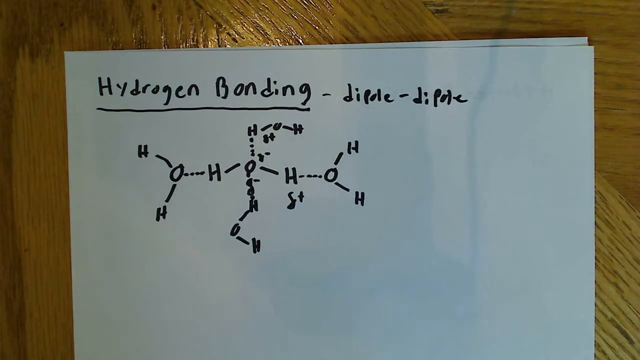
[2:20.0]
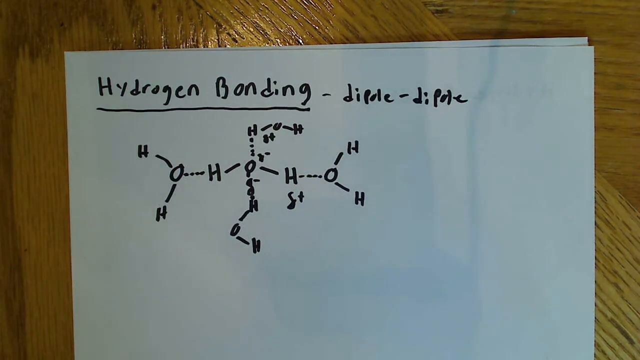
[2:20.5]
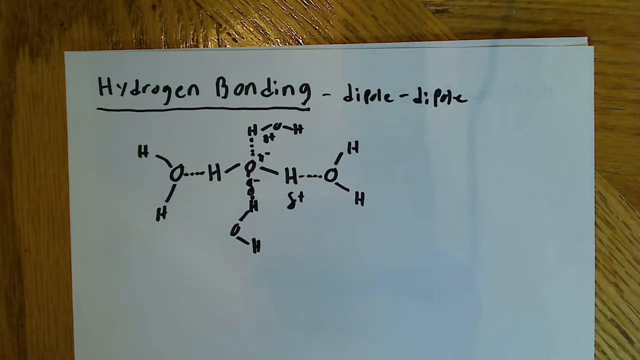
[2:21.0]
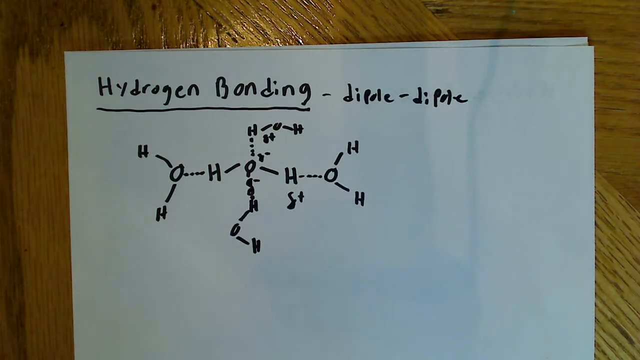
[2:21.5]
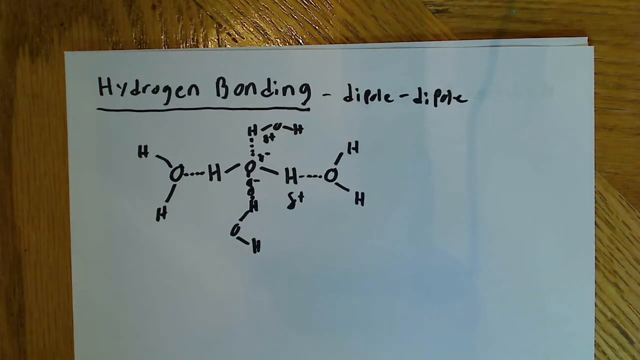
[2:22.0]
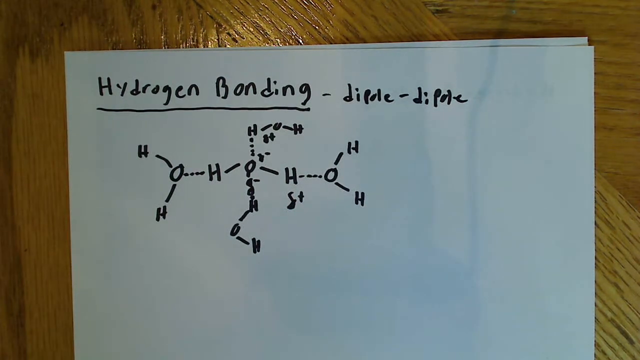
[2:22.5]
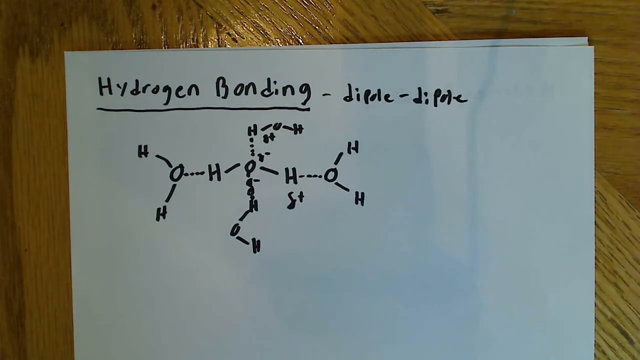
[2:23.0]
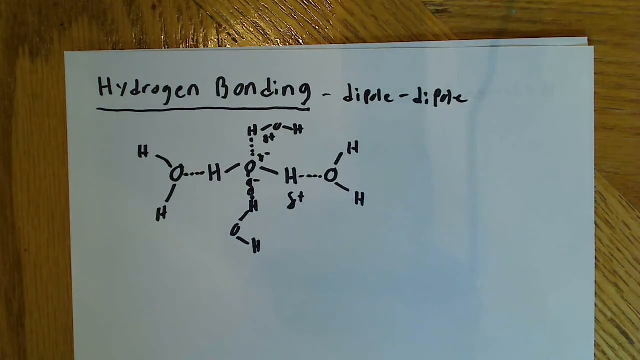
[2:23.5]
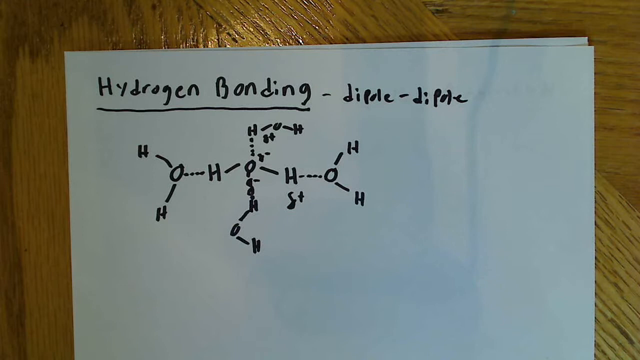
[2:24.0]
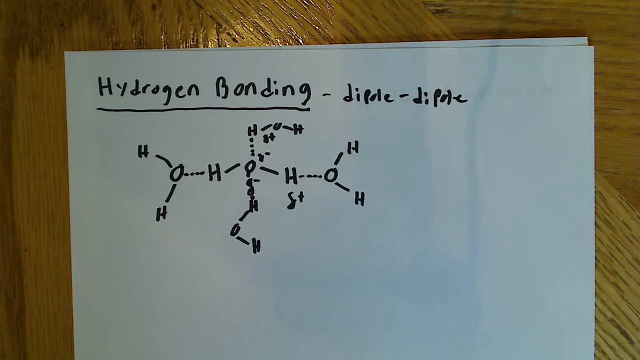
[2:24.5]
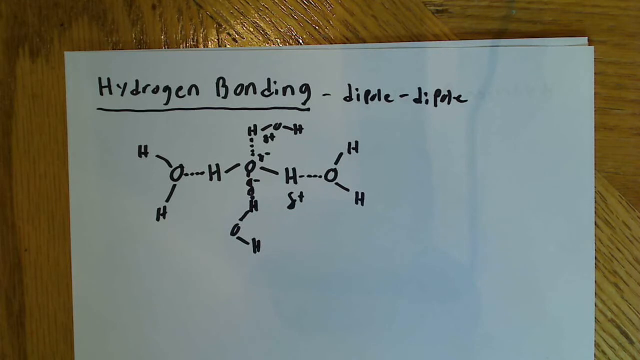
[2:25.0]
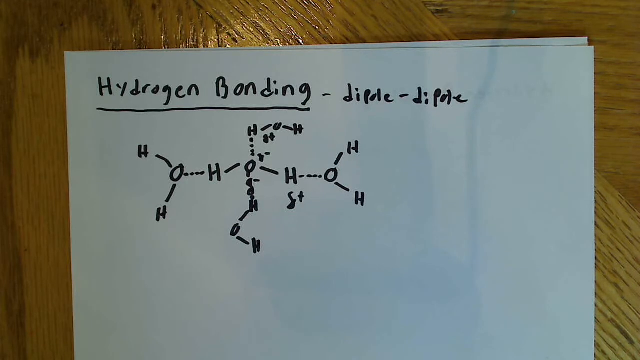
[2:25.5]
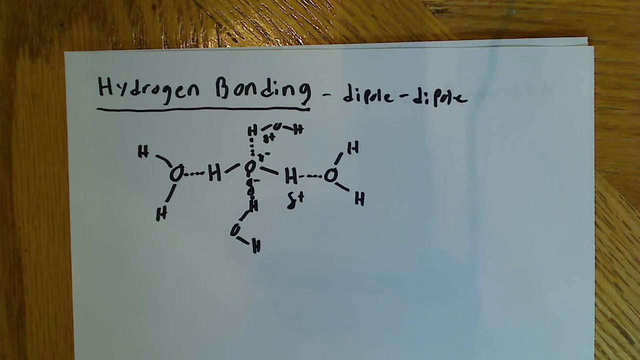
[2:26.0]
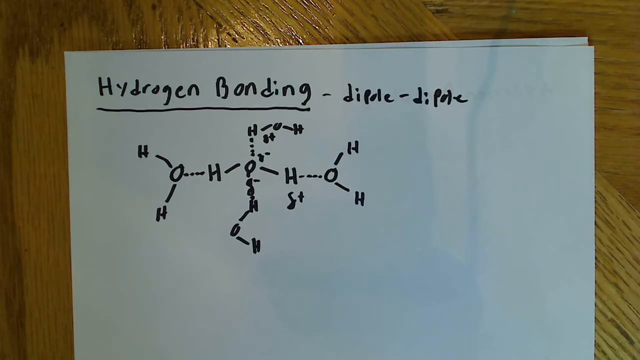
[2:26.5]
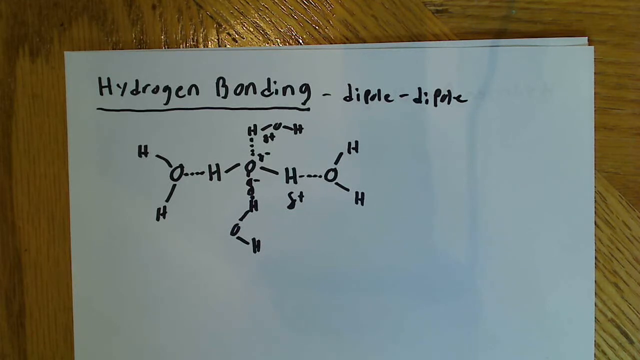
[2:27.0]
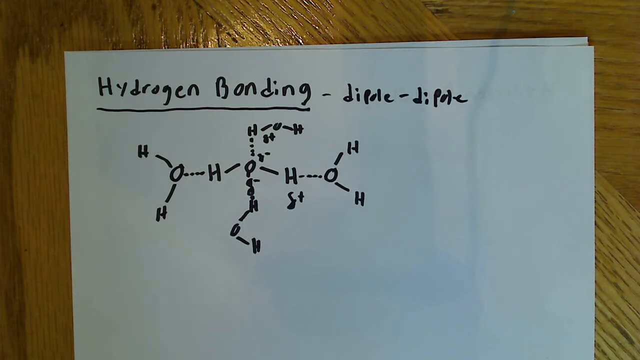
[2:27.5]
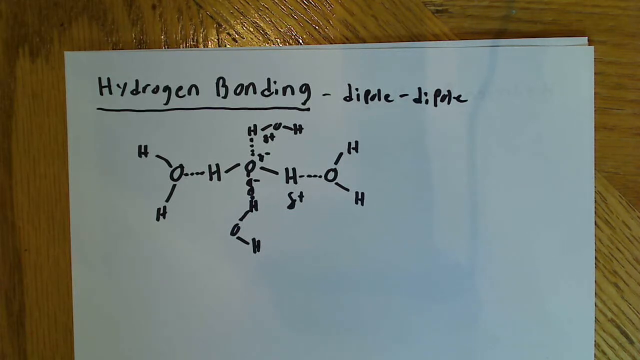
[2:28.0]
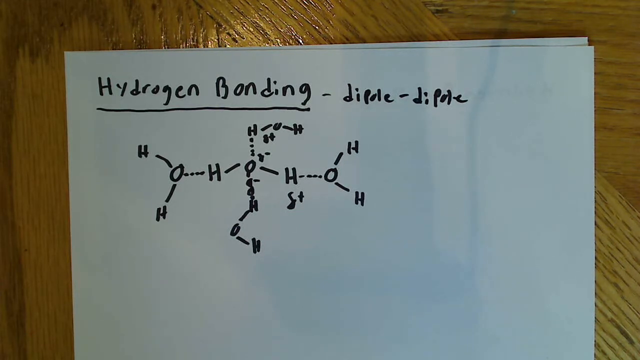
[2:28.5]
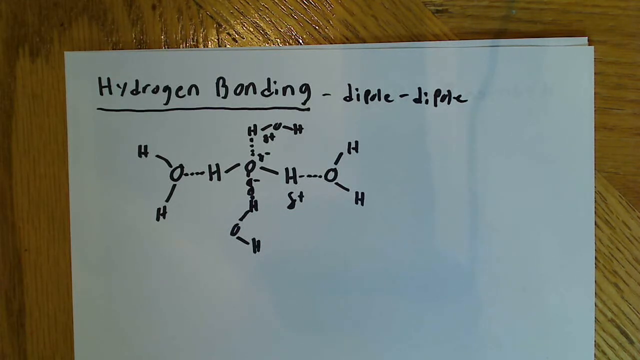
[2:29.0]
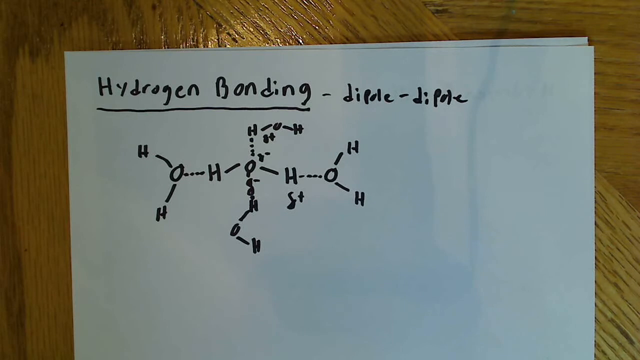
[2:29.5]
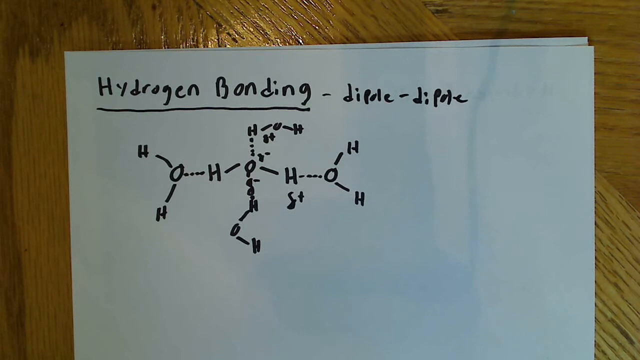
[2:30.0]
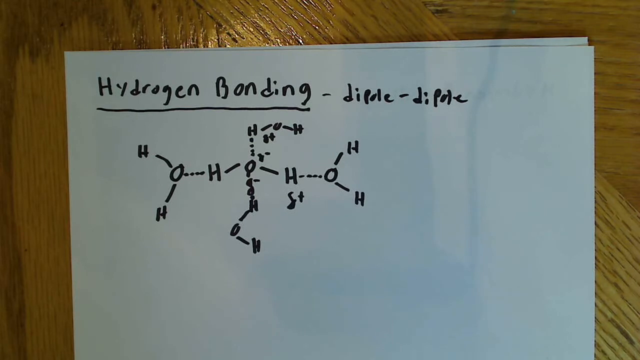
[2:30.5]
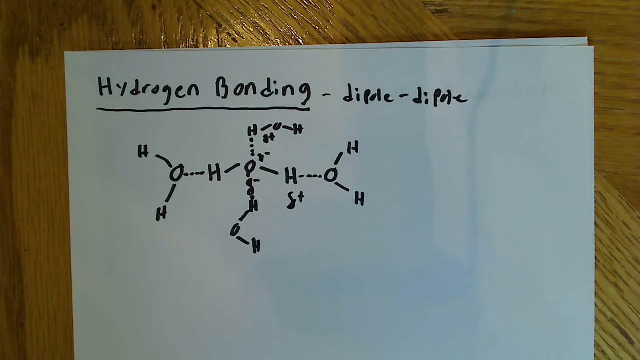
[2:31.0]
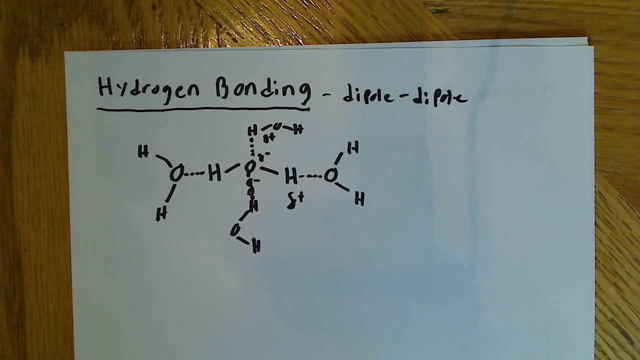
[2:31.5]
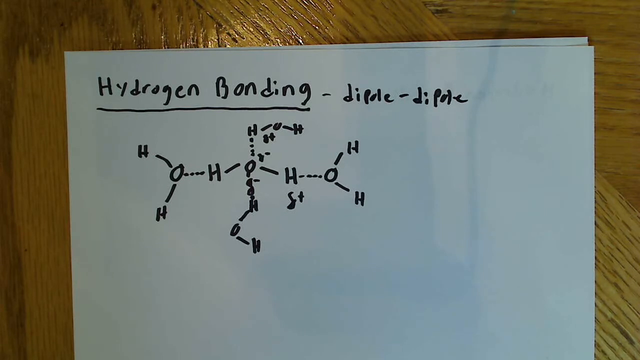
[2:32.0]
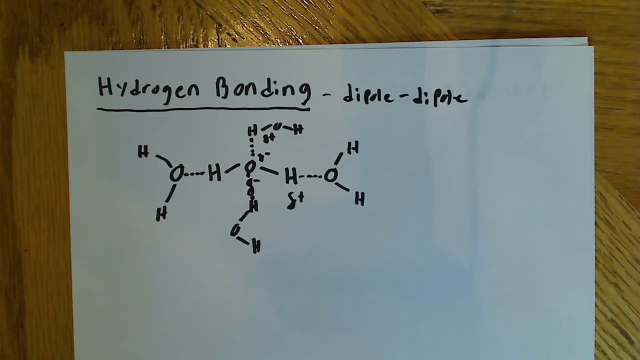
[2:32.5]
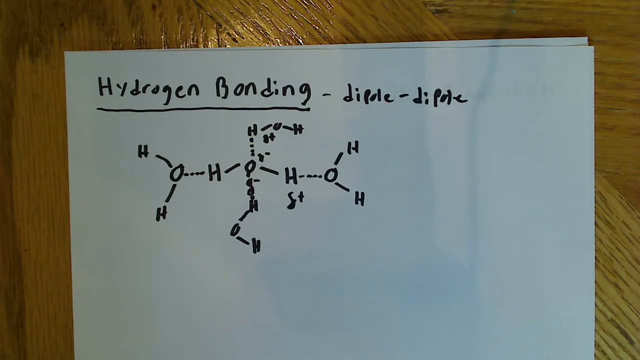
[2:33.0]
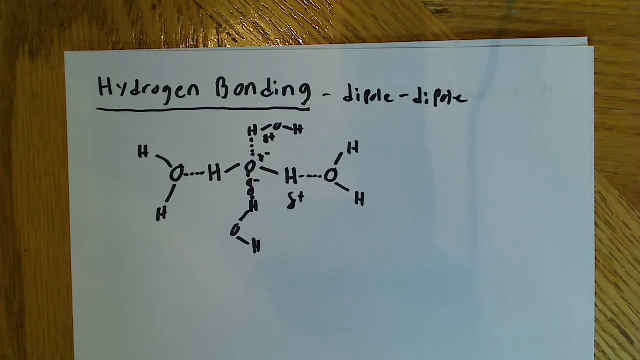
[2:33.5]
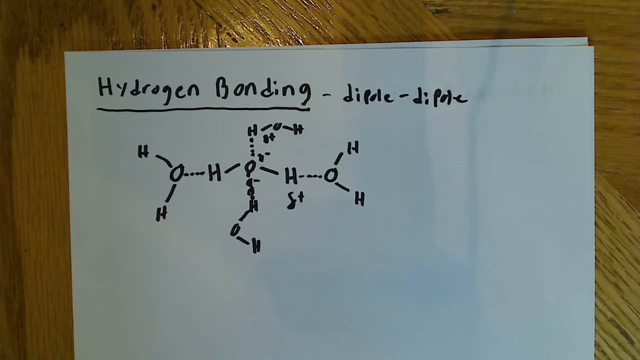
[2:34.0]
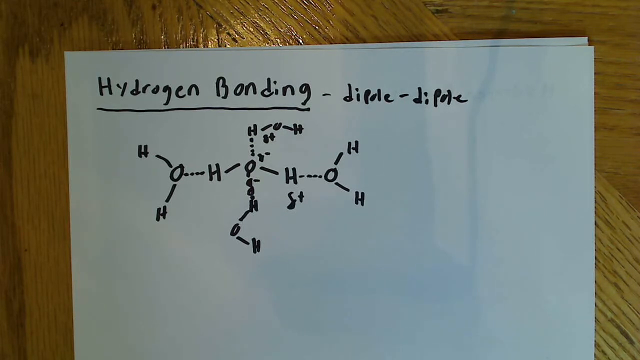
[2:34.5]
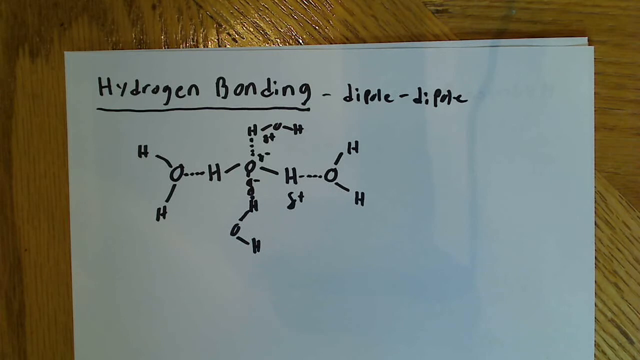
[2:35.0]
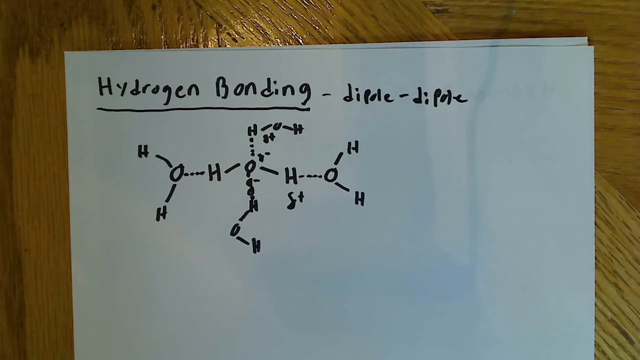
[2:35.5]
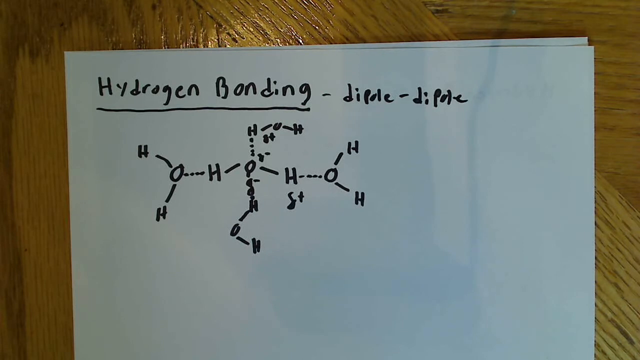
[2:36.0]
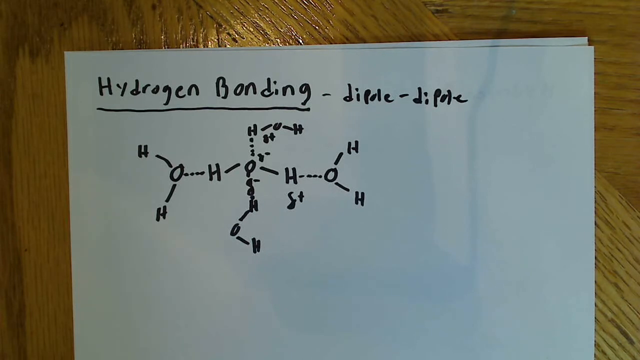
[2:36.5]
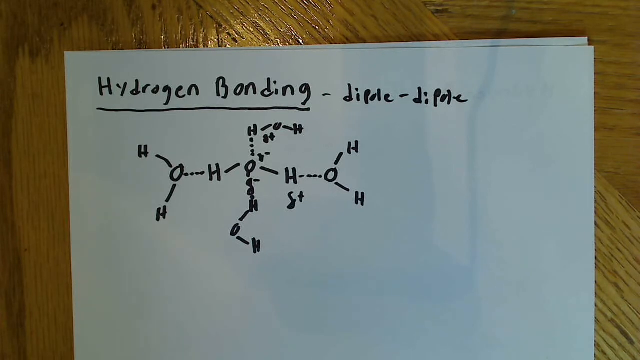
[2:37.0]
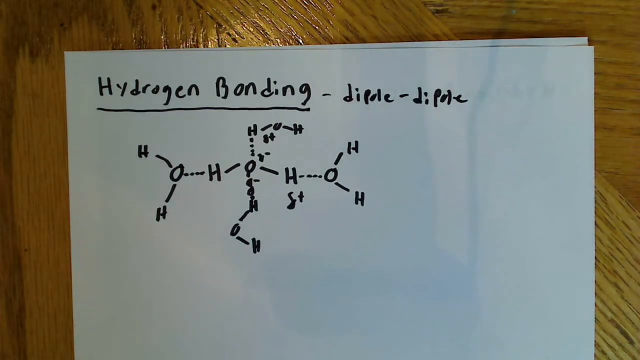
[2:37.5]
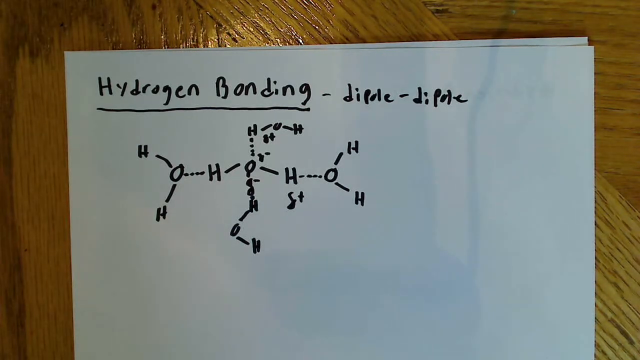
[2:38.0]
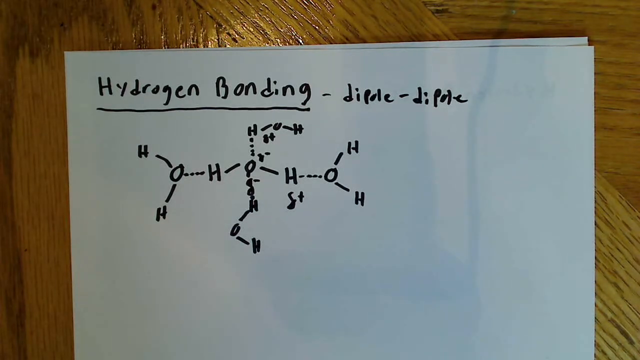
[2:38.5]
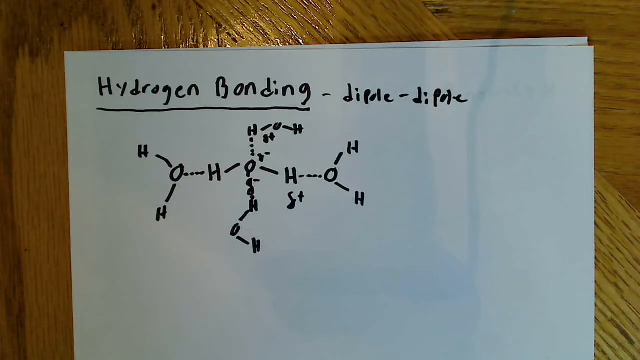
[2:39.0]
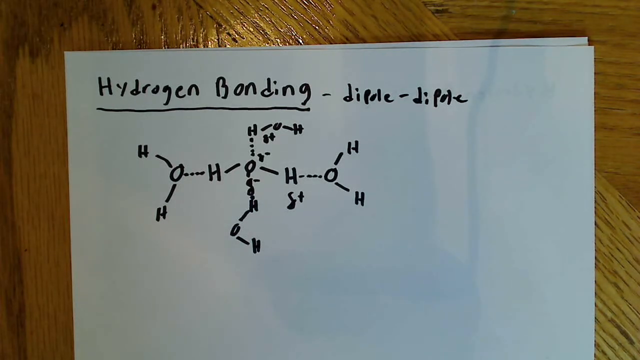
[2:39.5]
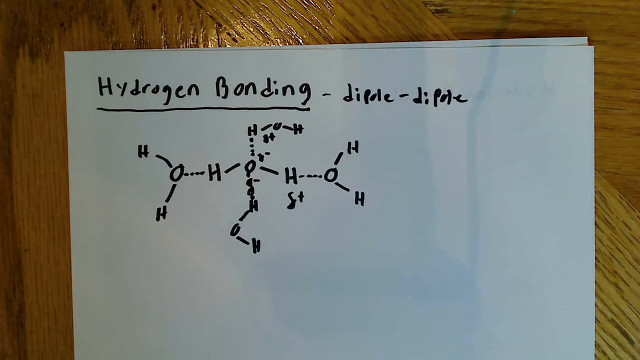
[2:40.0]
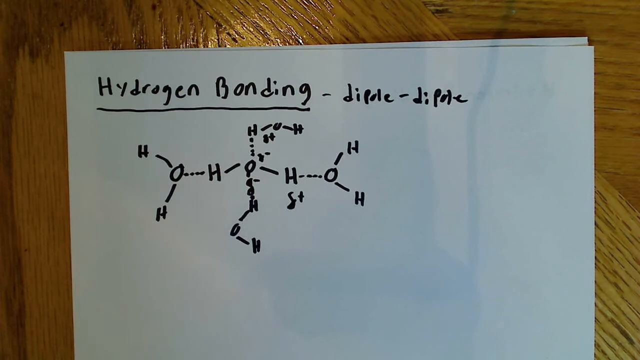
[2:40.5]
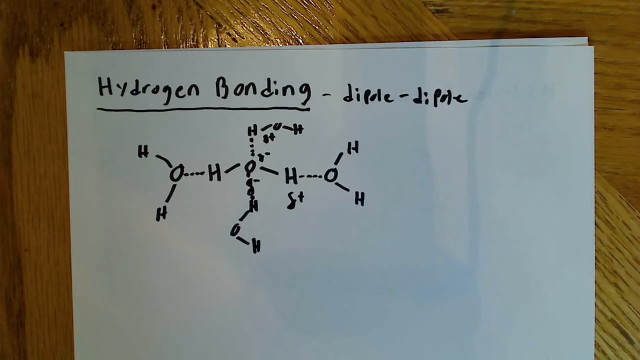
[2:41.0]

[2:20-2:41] Two pieces of white printer paper lie on a shiny wooden table with a heavy wood grain. In the top left of the paper, "hydrogen bonding" is written with a capital H and a capital B and the rest lowercase, underlined, followed by a dash, the word "dipole" in lowercase, another dash, and "dipole" again in lowercase. Beneath is a complex diagram of capital Hs and capital Os connected by dashes or dotted lines, all in black Sharpie, with the Hs outnumbering the Os. Some of the Hs and Os have what appear to be lowercase Greek deltas beneath or above them, with either minus or plus signs next to the deltas. The diagram sort of has two axes, one running left to right and one running top to bottom. Nothing moves in the scene.